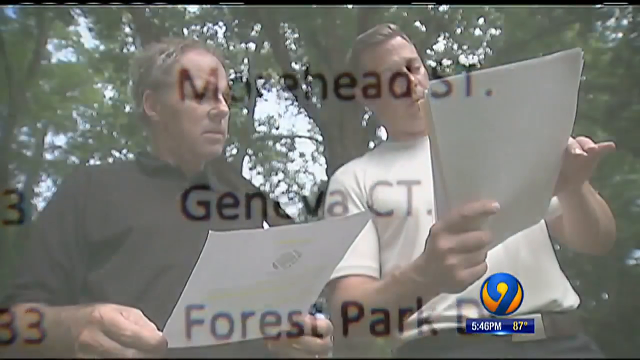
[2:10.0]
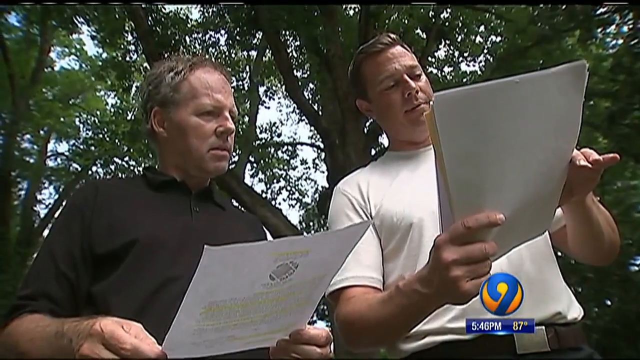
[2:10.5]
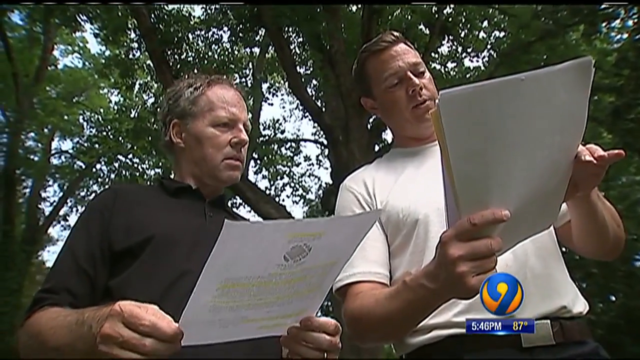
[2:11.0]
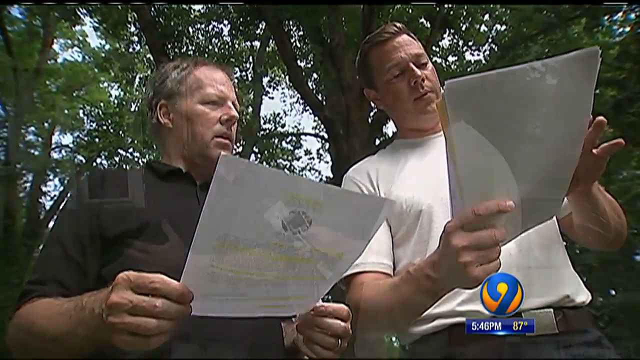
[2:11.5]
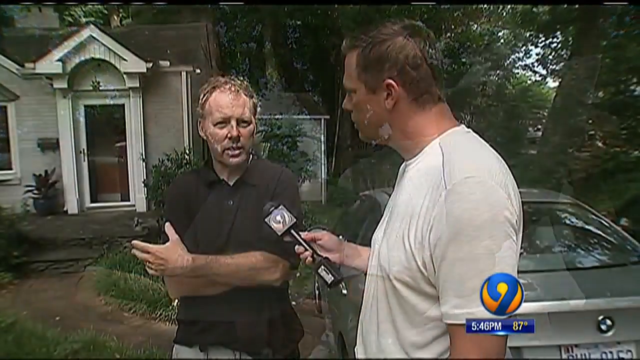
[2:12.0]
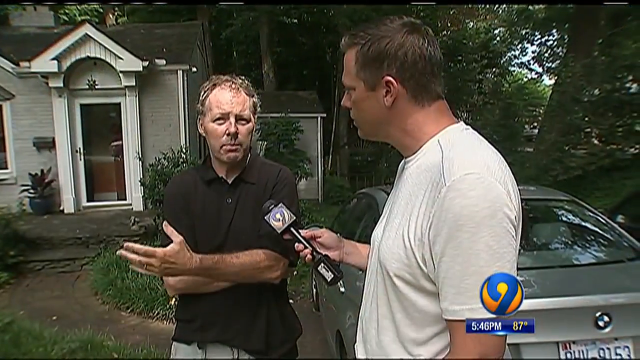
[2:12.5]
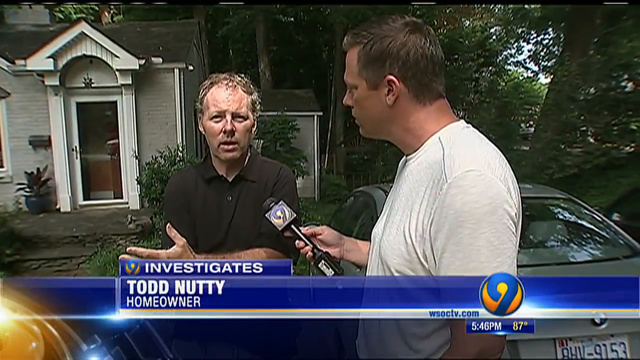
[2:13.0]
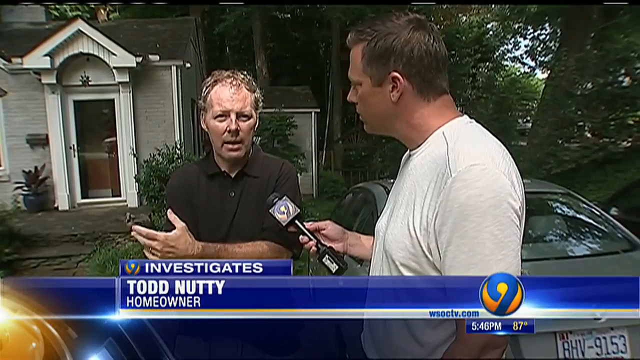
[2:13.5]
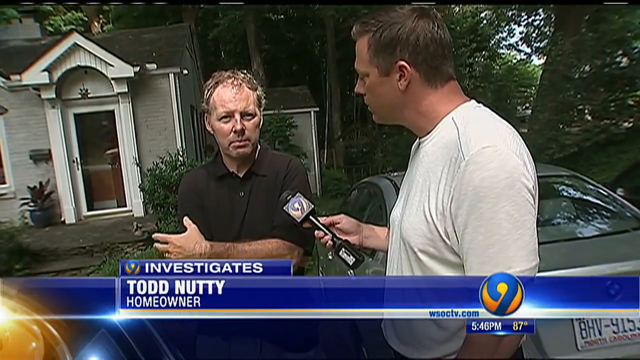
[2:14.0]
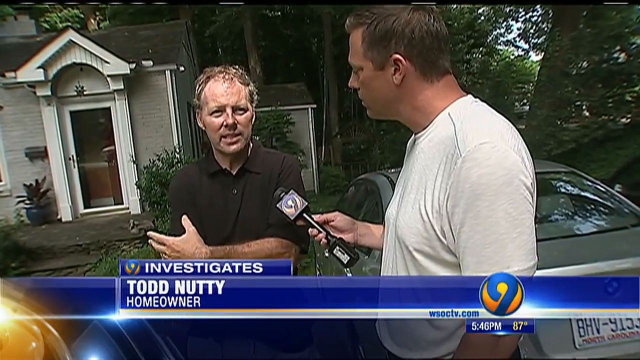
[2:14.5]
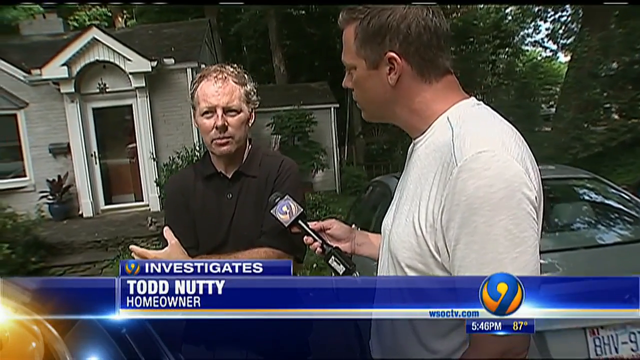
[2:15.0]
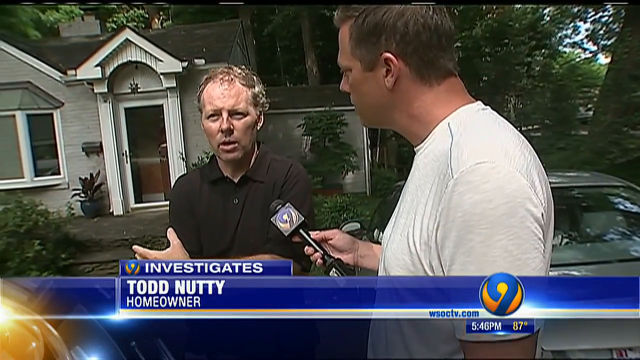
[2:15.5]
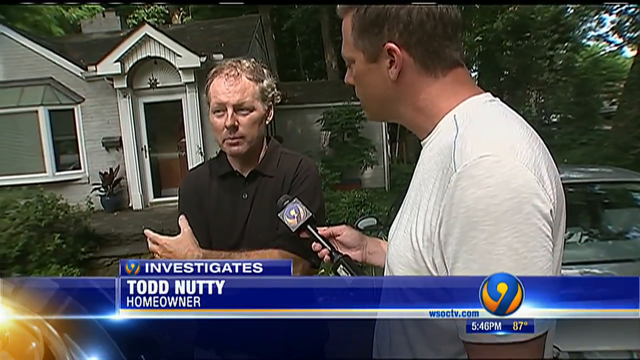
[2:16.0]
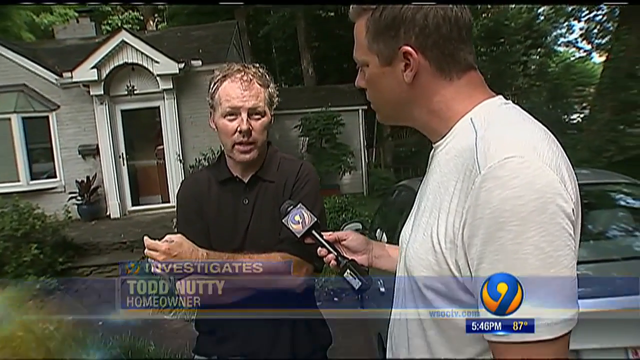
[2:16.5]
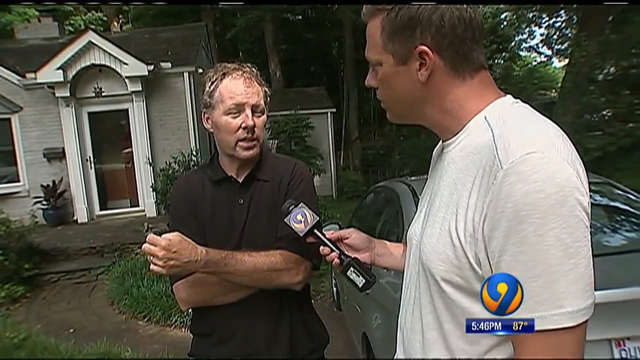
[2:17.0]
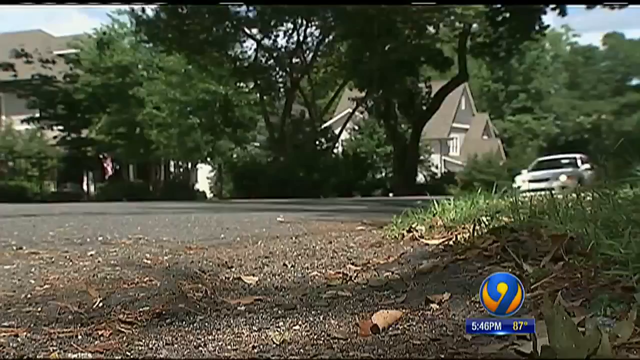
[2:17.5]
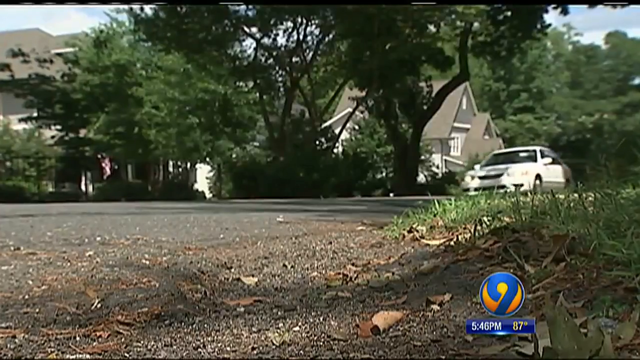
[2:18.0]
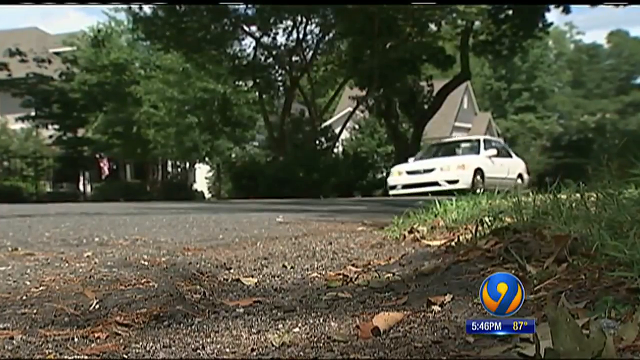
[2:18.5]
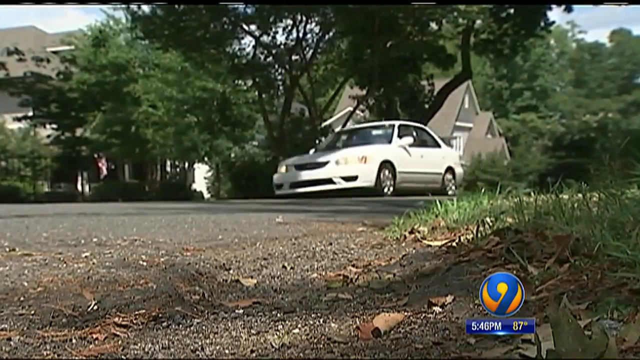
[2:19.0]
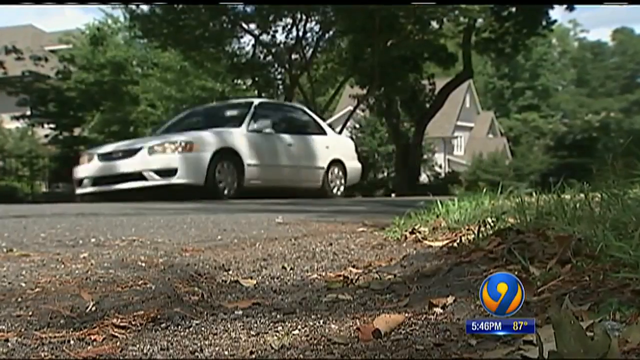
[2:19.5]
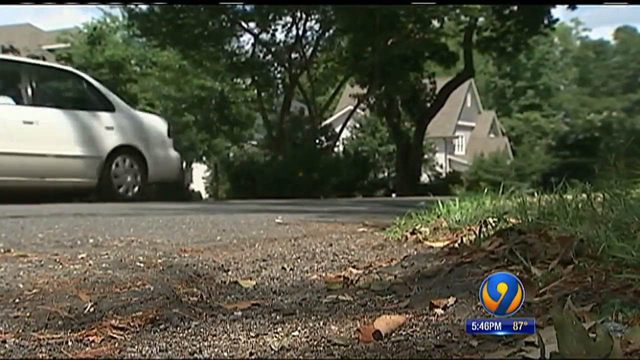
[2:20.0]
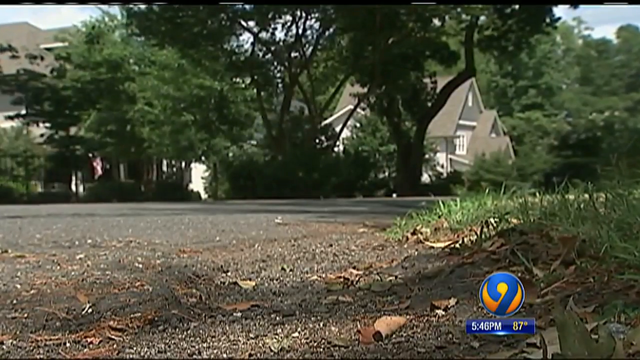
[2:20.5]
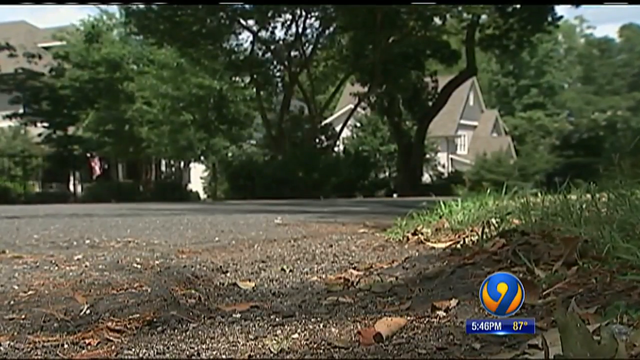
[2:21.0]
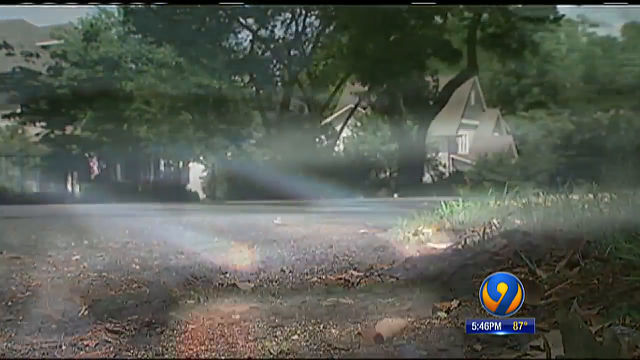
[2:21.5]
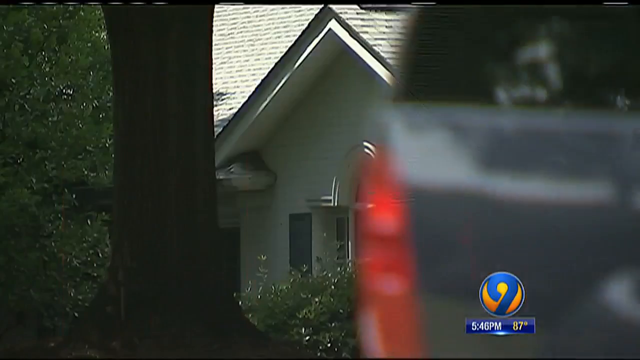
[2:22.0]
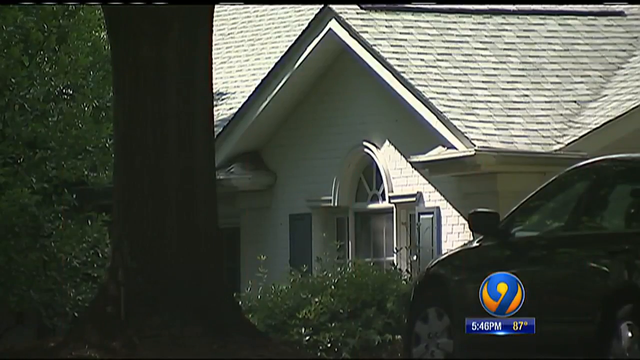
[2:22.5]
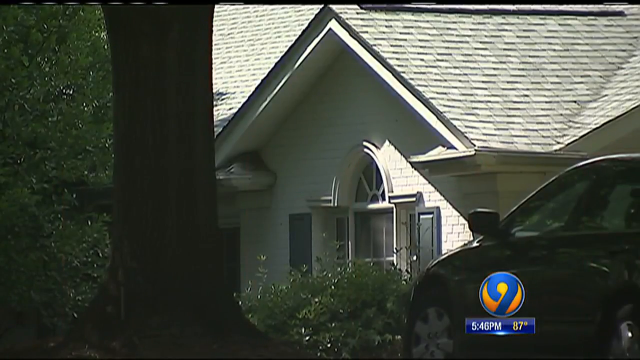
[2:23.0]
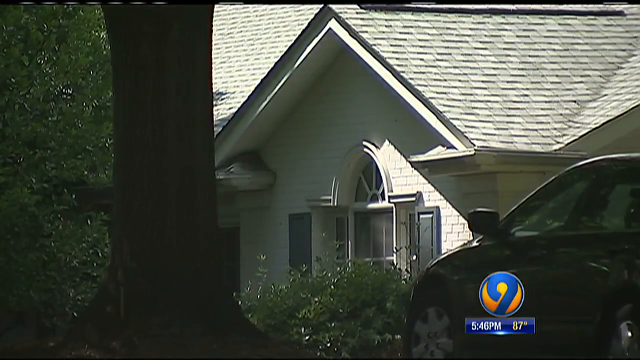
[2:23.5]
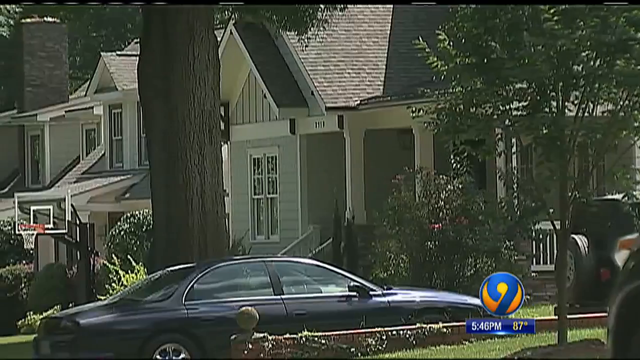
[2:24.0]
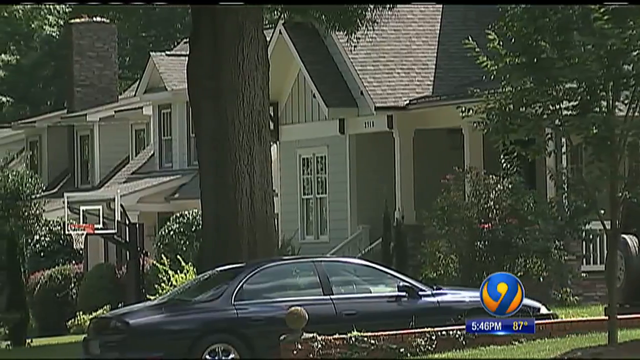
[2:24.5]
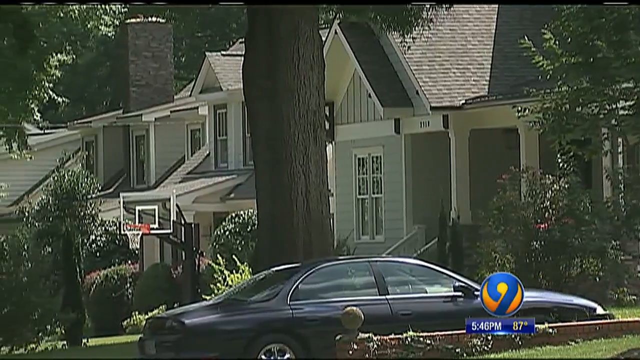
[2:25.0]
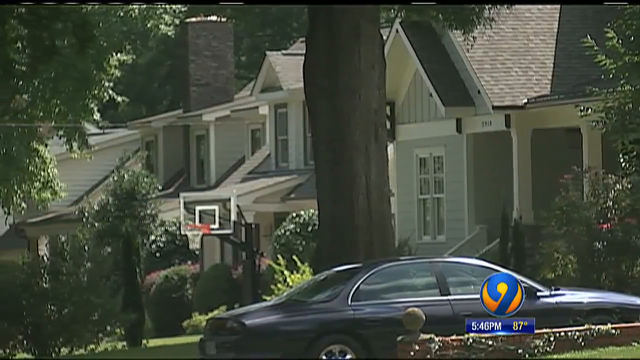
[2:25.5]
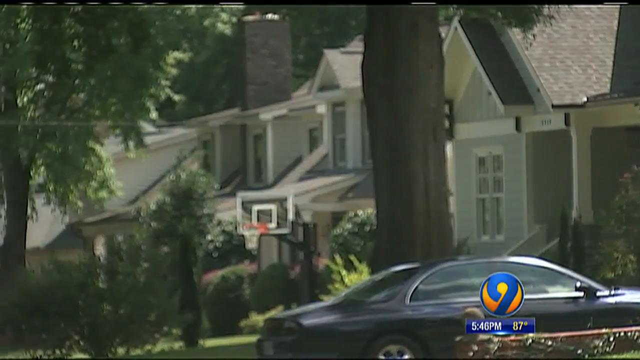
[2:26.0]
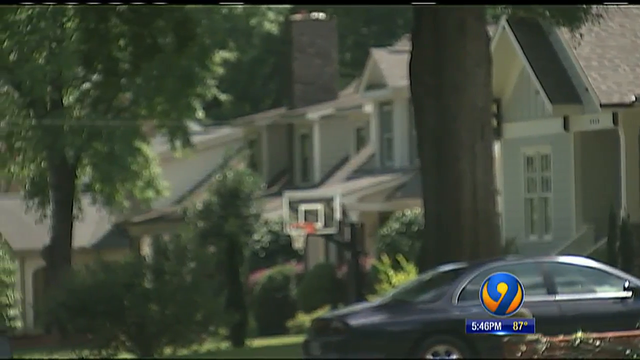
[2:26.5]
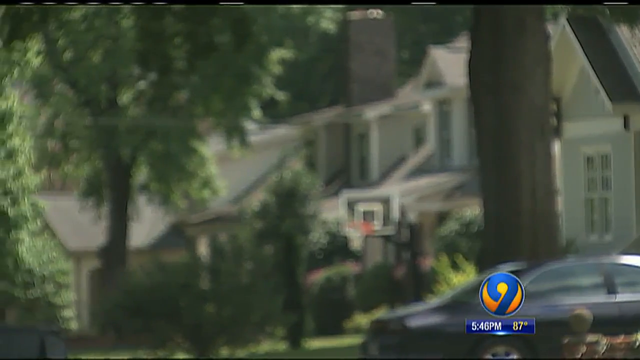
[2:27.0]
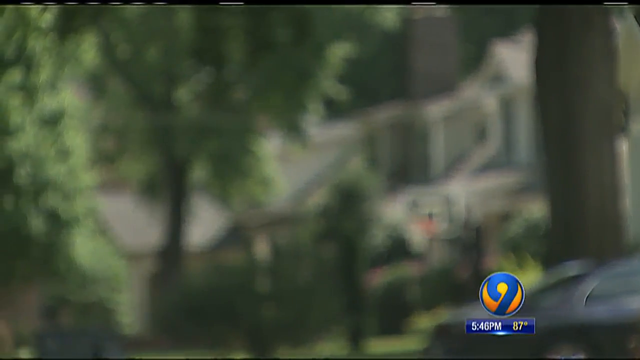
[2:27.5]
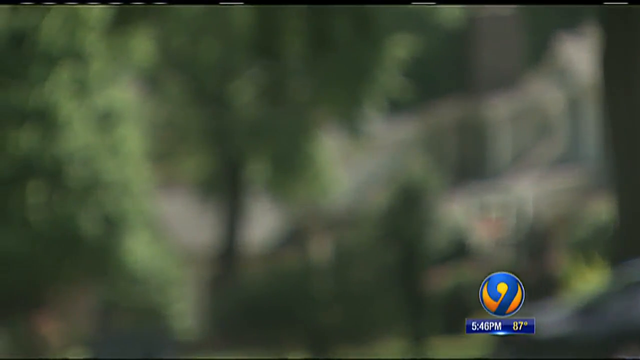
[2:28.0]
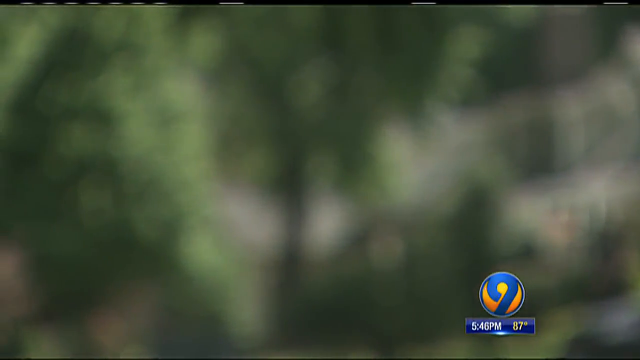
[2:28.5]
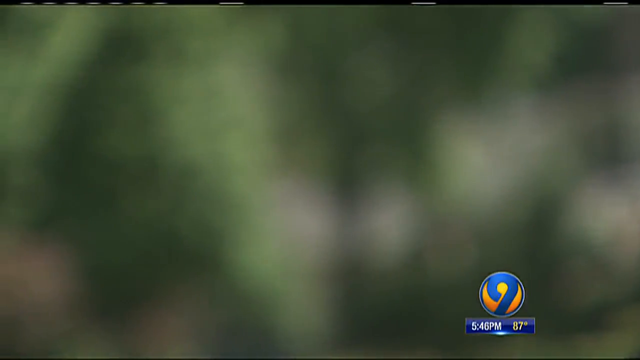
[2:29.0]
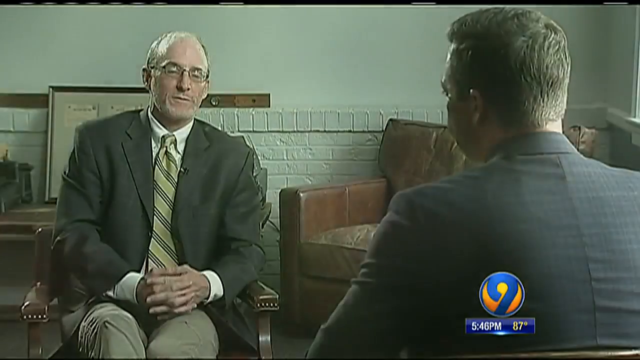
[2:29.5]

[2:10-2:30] At the start, people are shown reading letters, apparently the same letter the earlier woman received. The reporters then talk to a homeowner named Todd Nutty, who is willing to go on camera. A car drives by, and random houses are shown, probably in Mr. Nutty's neighborhood. Then a man who kind of looks like a lawyer appears, with no name given; he wears a suit and tie and is in a living room with leather chairs.